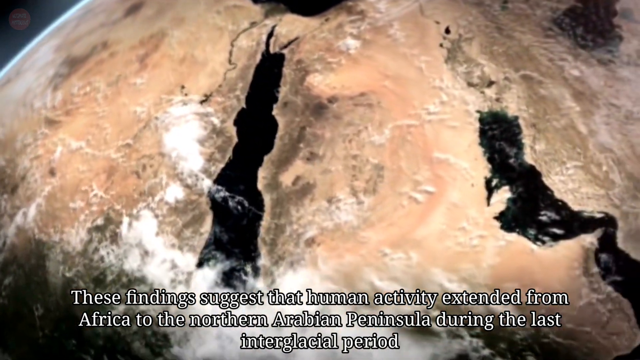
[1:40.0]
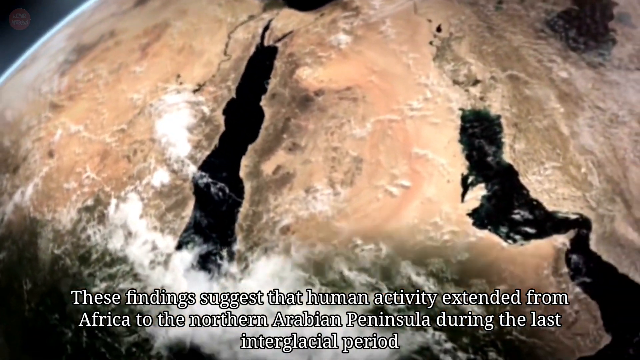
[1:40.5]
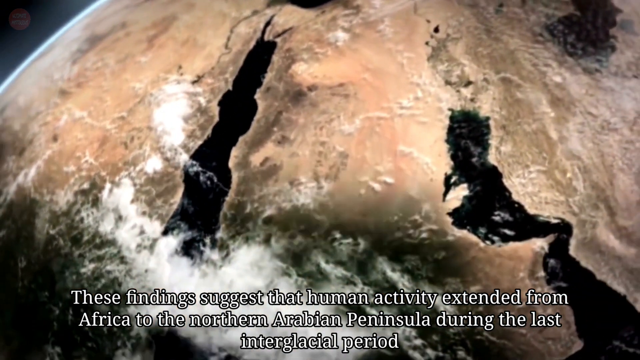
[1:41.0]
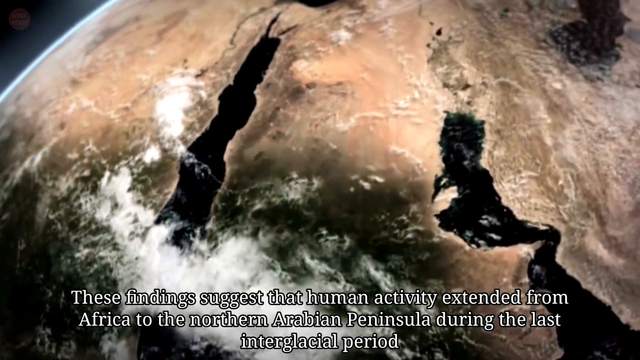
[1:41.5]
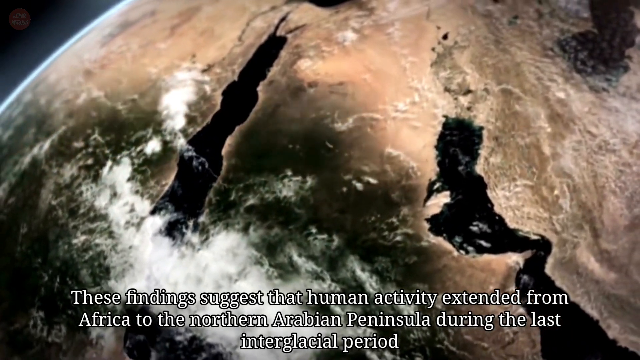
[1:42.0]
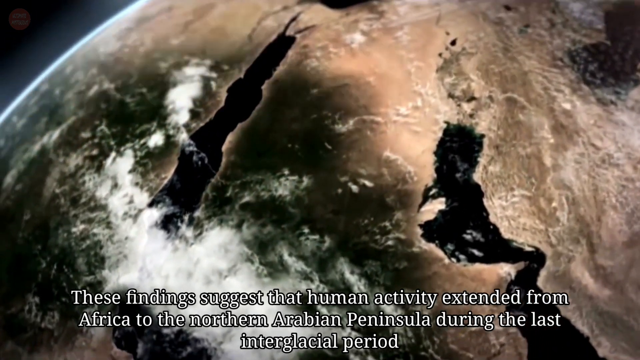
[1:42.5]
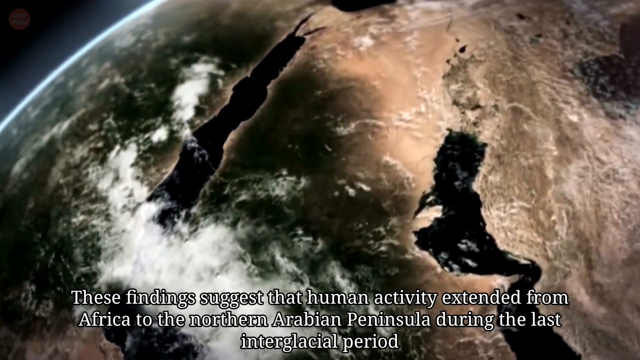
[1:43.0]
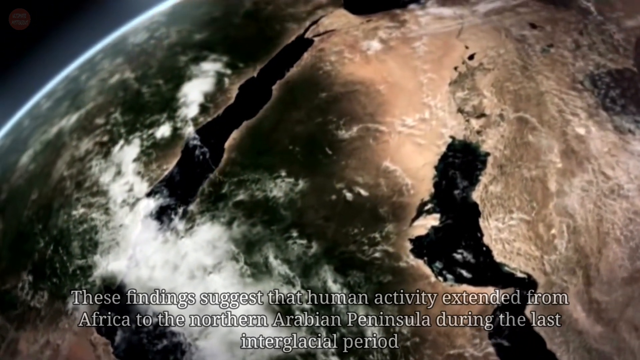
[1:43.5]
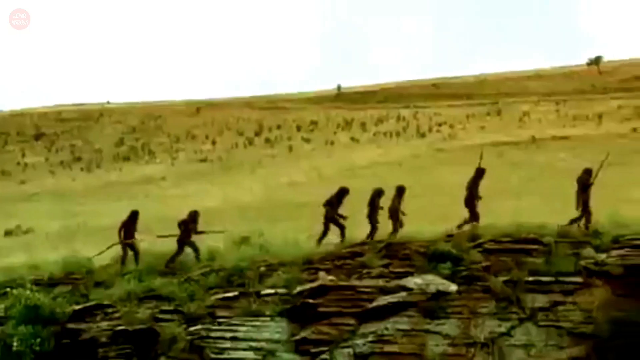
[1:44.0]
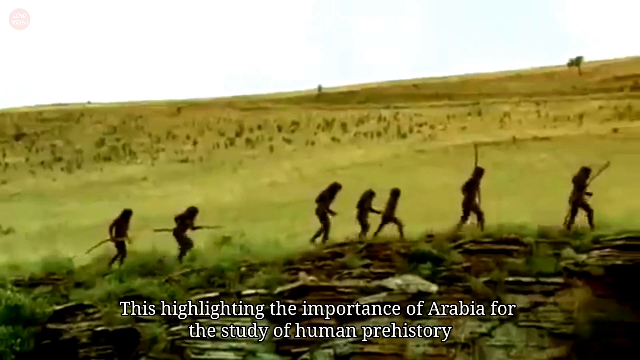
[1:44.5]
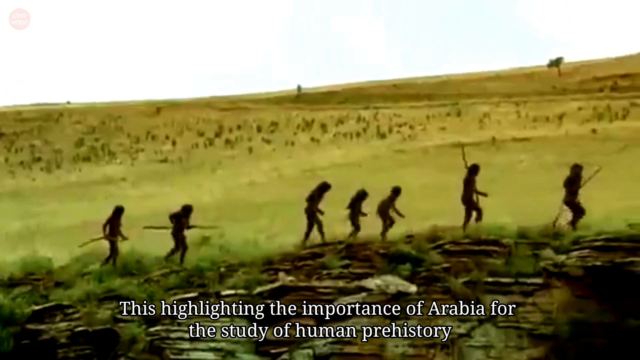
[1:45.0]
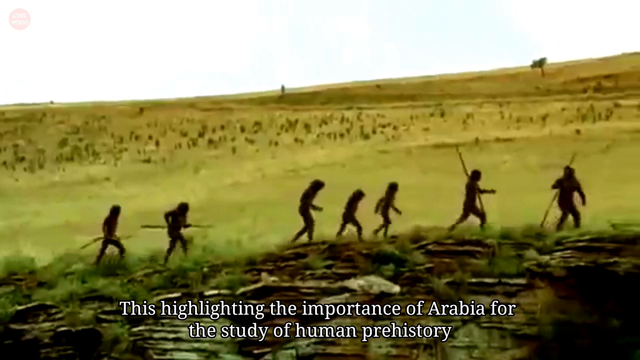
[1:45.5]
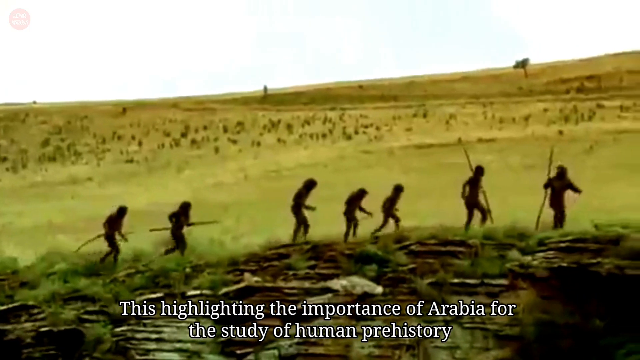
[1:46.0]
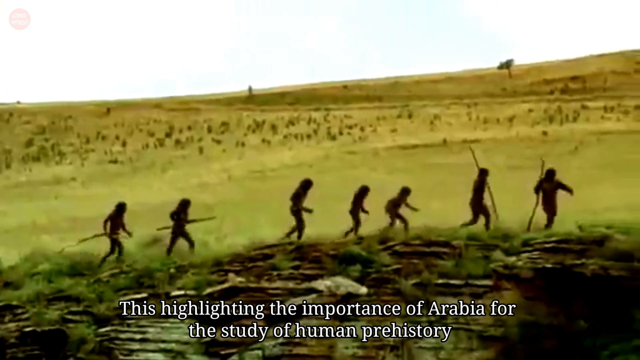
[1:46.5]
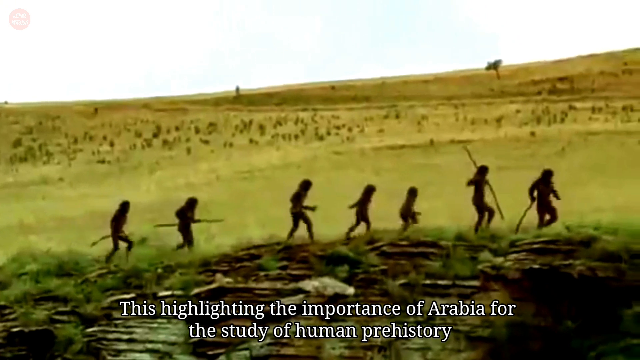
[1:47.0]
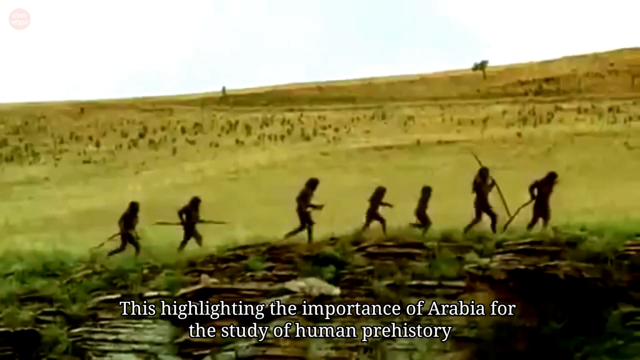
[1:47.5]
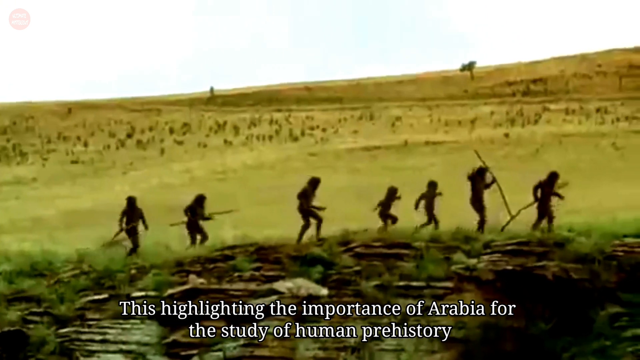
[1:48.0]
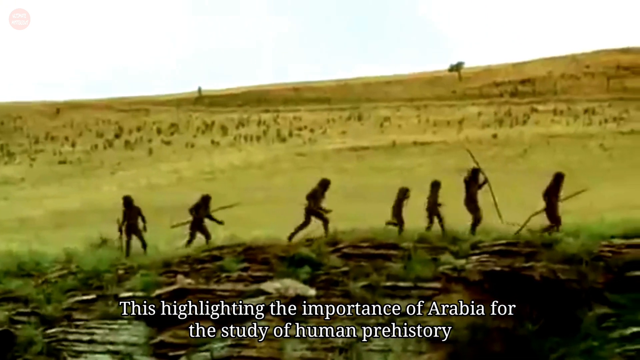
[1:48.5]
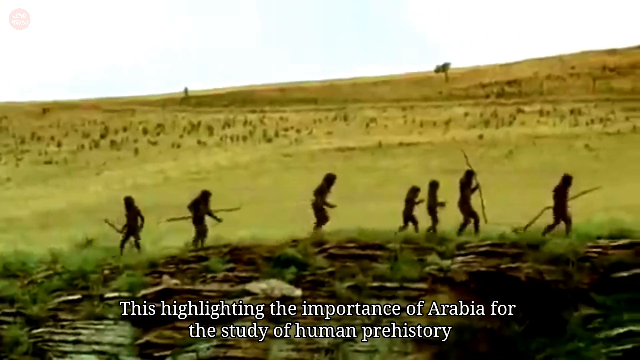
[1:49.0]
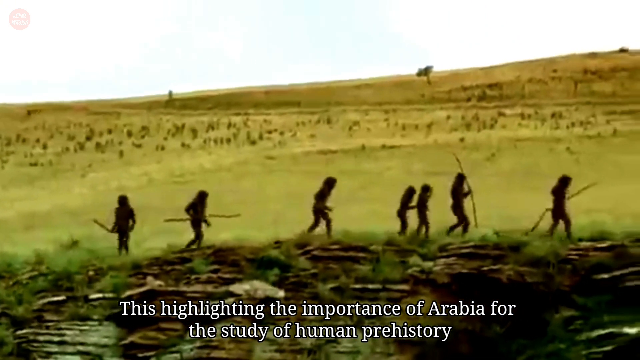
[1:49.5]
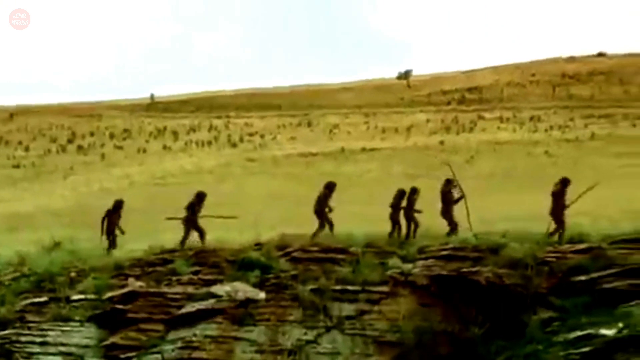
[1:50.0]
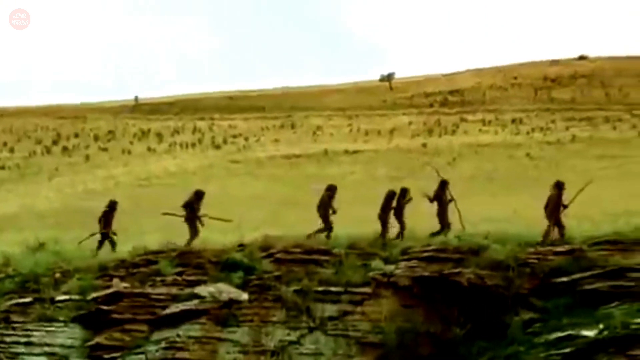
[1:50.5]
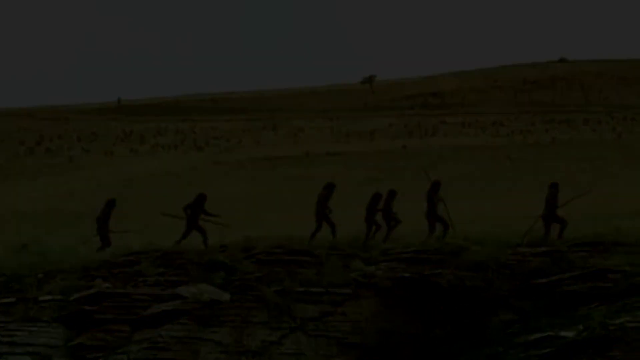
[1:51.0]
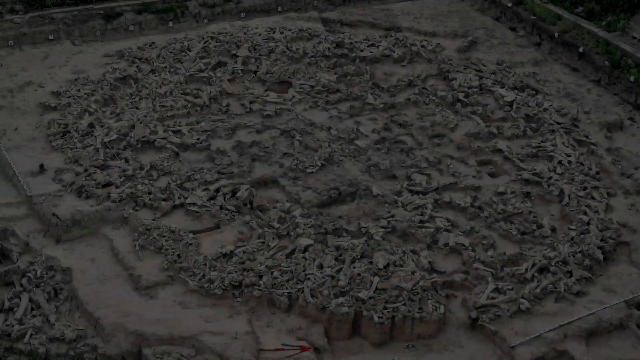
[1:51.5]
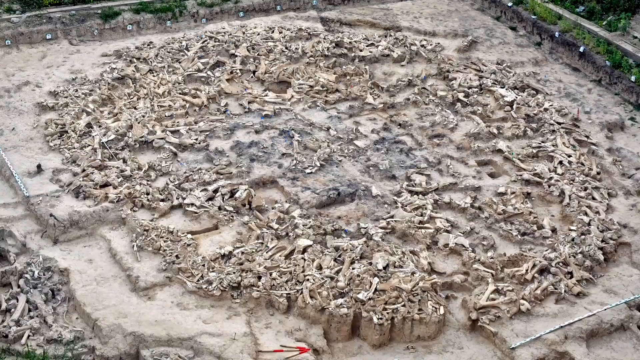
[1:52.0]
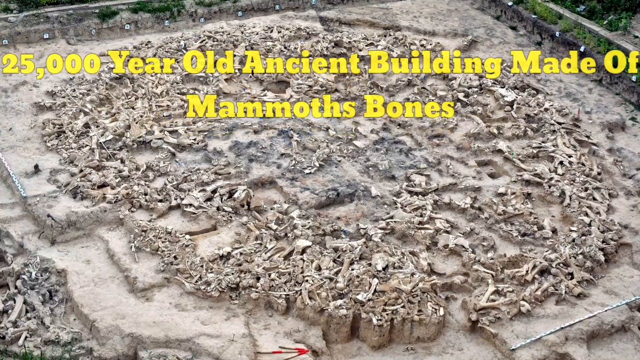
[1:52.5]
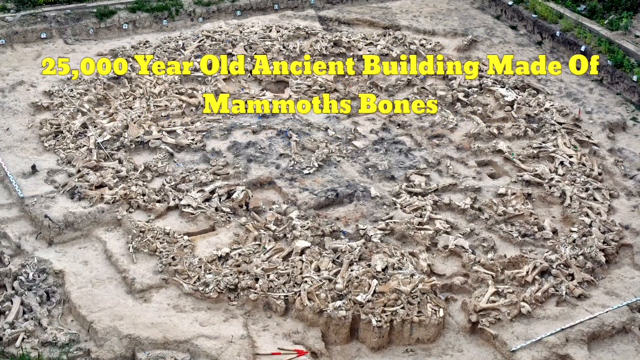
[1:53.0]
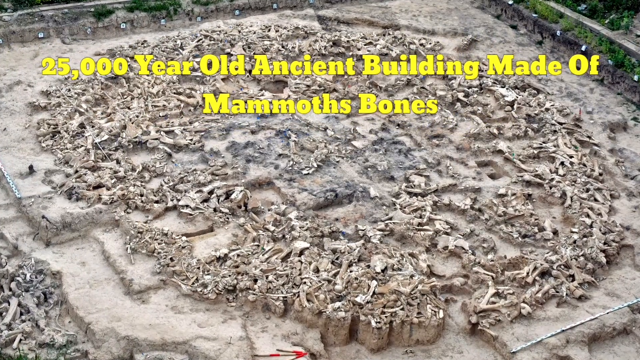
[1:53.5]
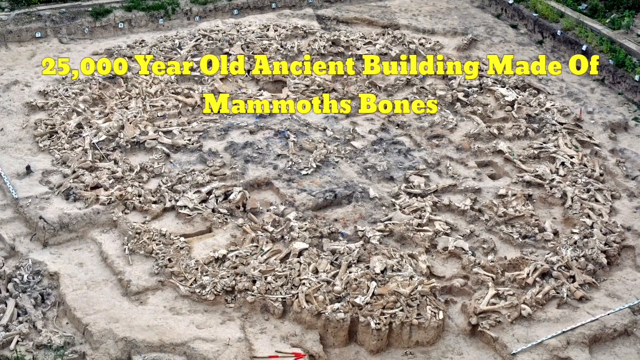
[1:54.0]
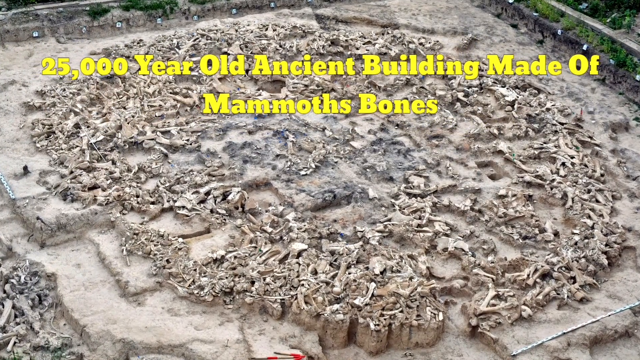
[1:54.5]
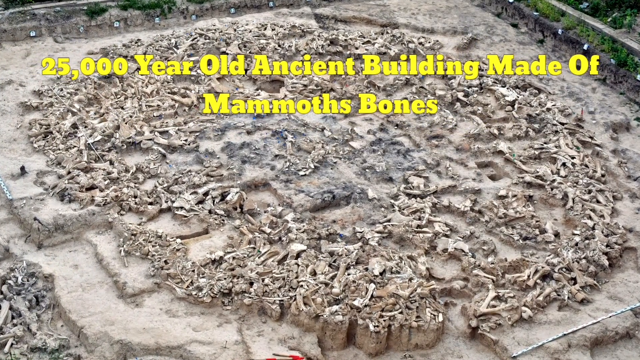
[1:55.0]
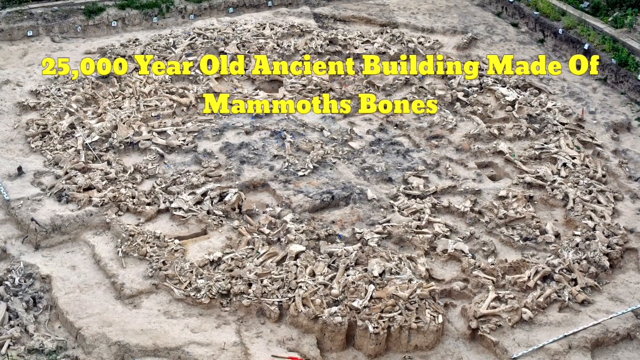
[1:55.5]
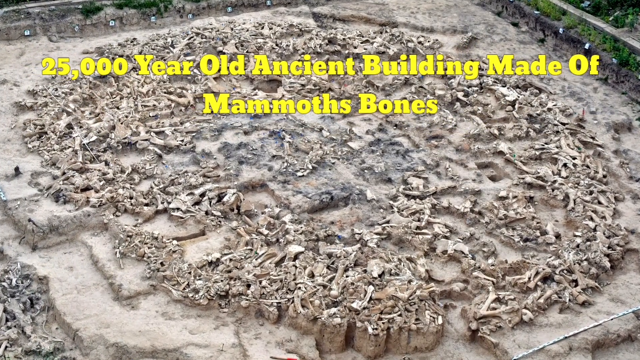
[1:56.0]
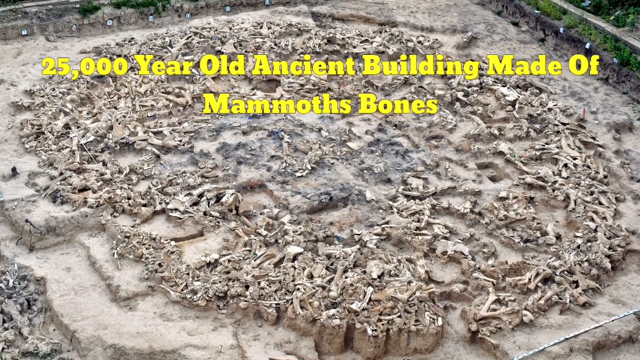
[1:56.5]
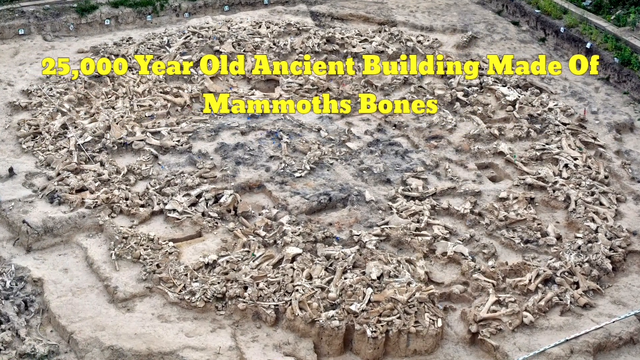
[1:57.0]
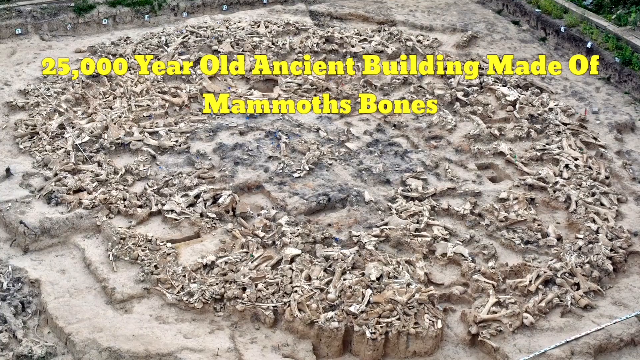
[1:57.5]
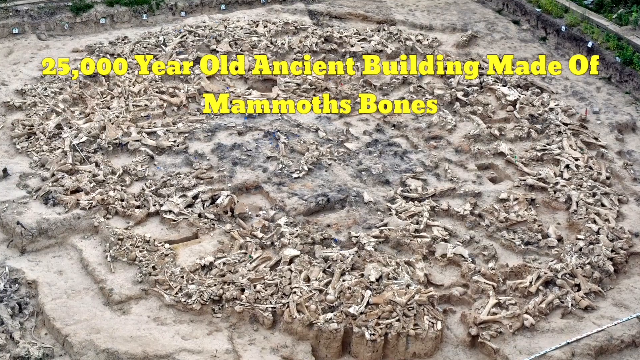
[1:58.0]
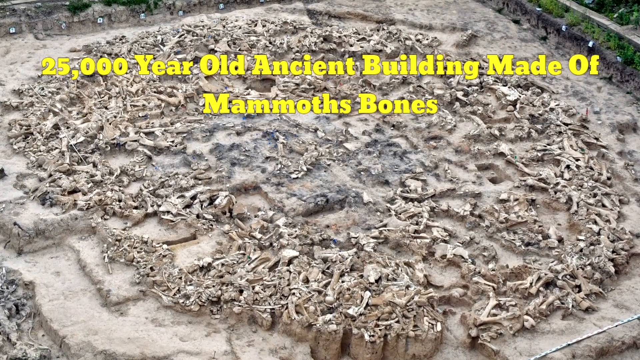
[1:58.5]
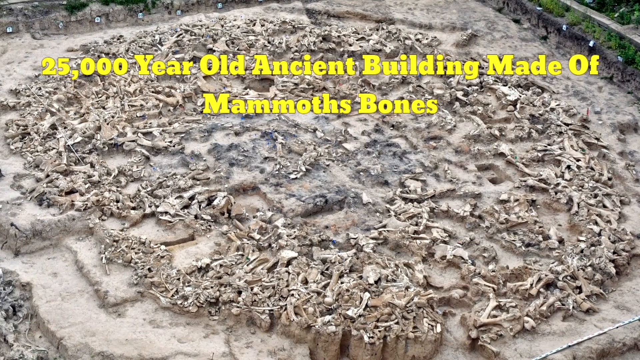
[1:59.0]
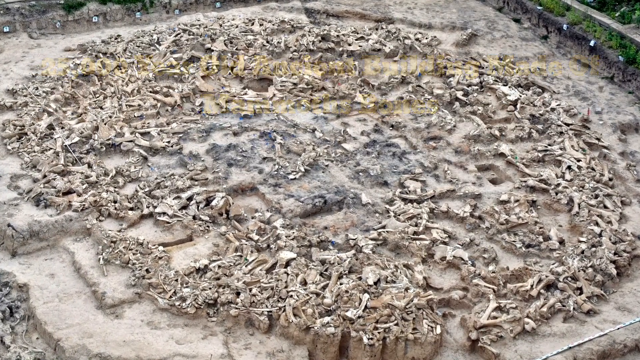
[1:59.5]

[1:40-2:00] A globe shows the earth turning green over time between glacial periods. Next is a still image of a 25,000-year-old building made of mammoth bones by ancient humans; the camera zooms into it. It is a large structure that now looks like a big, roughly circular ring of bones, and individual pieces are hard to make out. It looks like it was excavated, and walls now surround it, with many bones littered everywhere. A video also shows people in the background, looking like silhouettes, walking with spears on a grassy plain, representing ancient humans migrating across Arabia from Africa to Eurasia and onward.